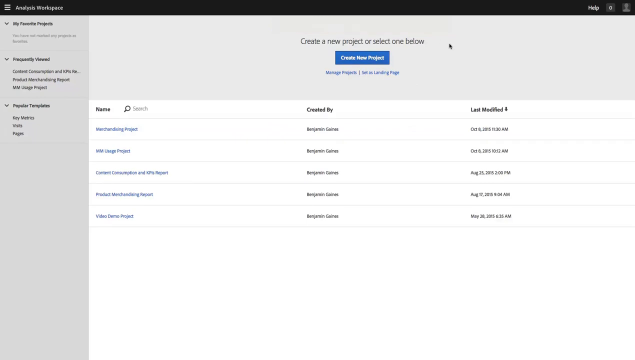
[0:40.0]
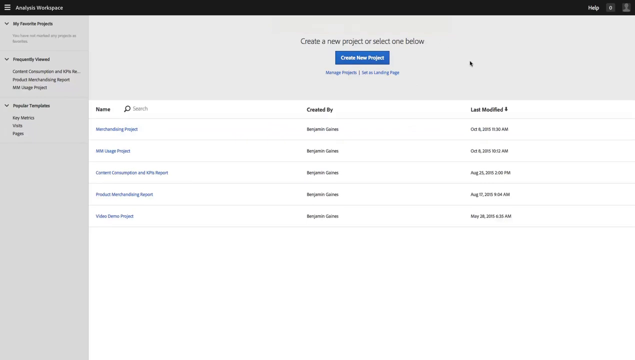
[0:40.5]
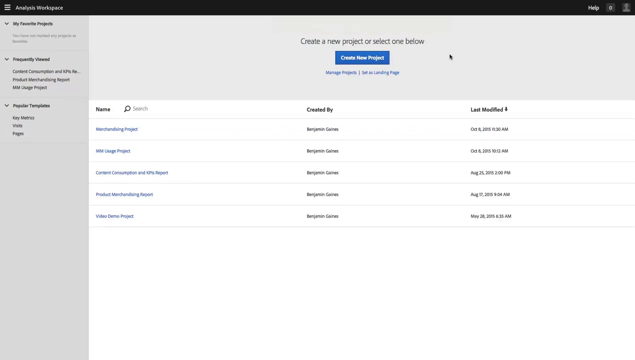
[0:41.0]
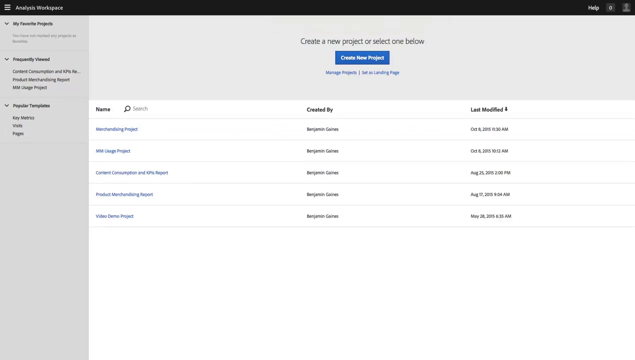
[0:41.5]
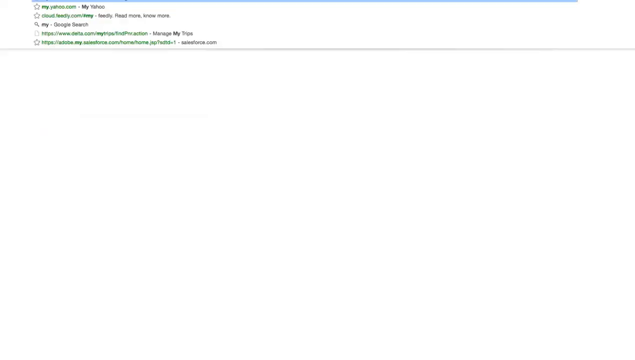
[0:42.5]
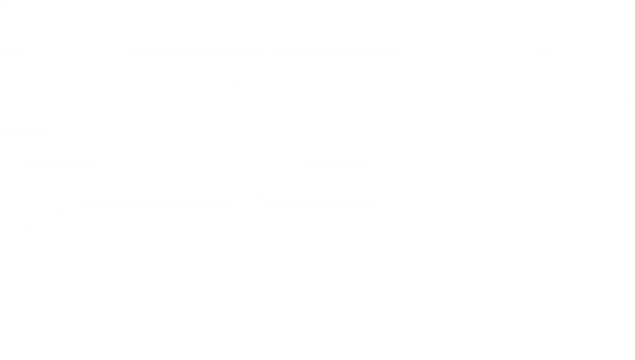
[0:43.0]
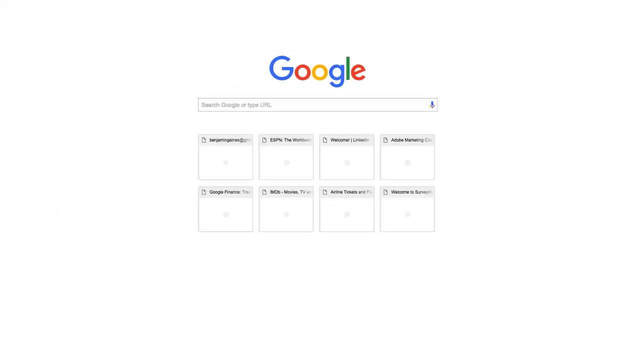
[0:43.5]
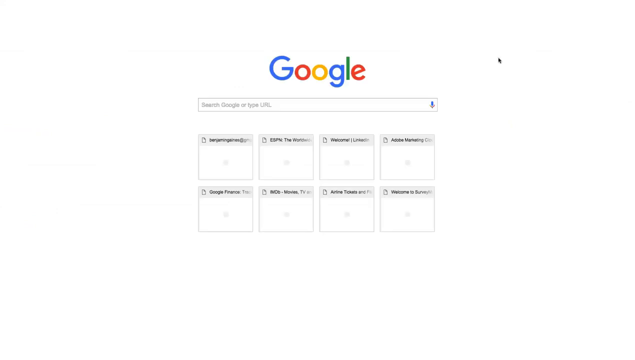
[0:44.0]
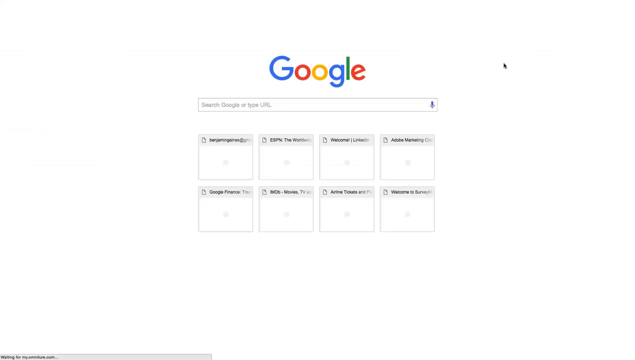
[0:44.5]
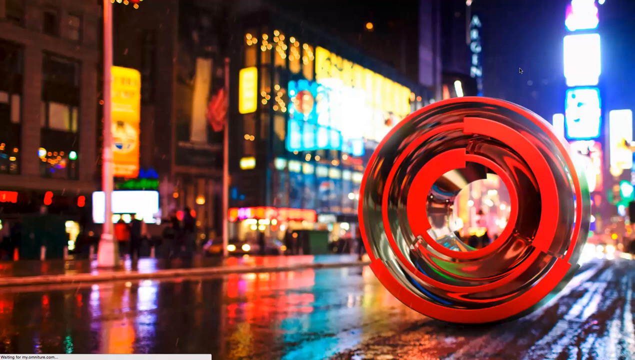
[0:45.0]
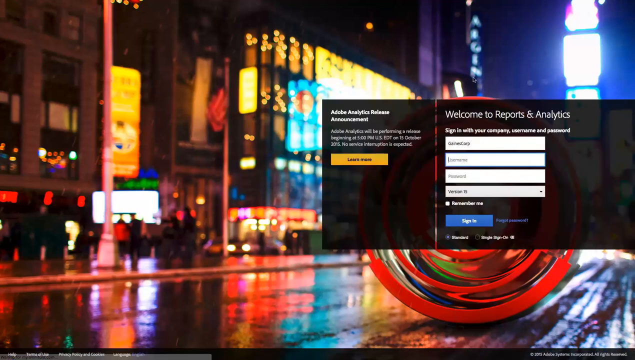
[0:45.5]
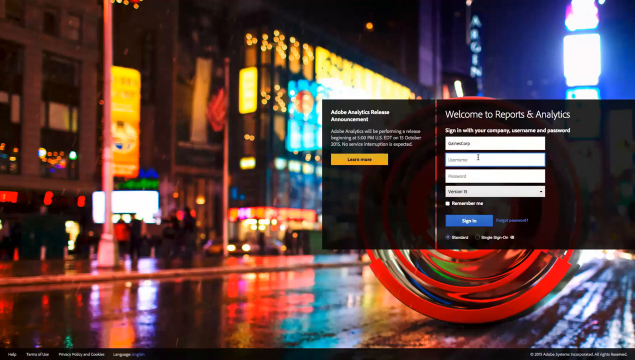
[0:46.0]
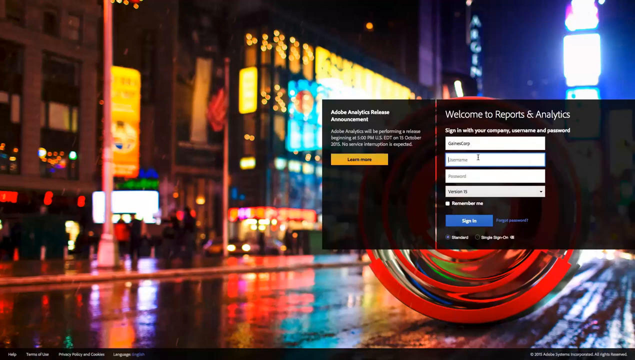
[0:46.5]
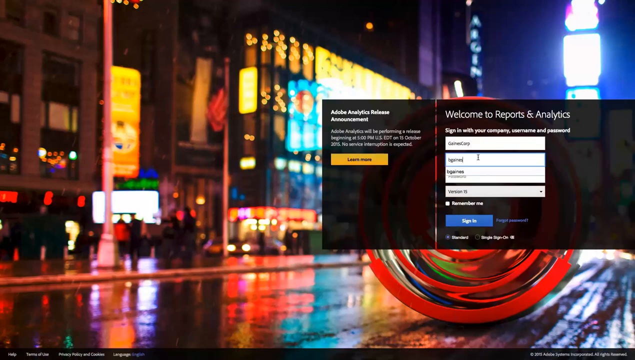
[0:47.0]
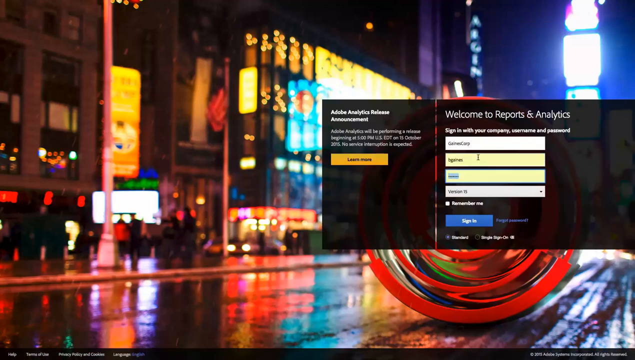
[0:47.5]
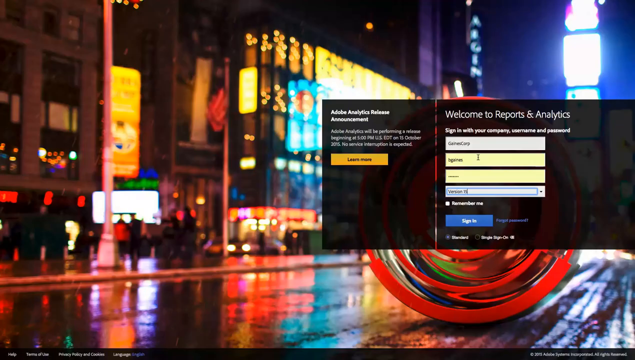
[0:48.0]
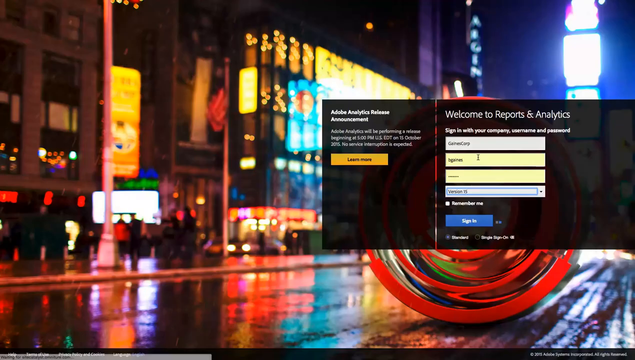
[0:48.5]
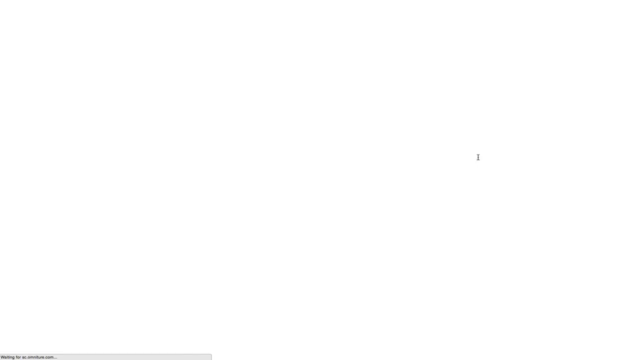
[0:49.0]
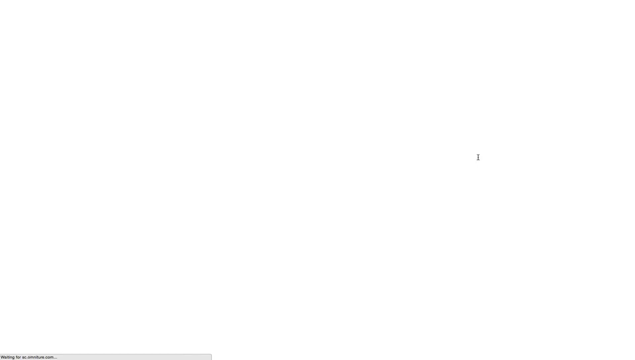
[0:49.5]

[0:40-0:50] The mouse pointer hovers to the right of the new project button for a few moments, then moves straight up out of frame at the top of the screen. The screen changes to blank white, and an address bar history with five different websites drops down at the top. A couple of moments later the Google home page appears, then the screen goes blank again and changes to a page with a background that looks like a picture of Times Square at night. On the right center it says "Welcome to Reports & Analytics" and "Sign in with your company, username and password." Information is typed into the four text fields below, the sign-in button is clicked, and the screen goes blank white again.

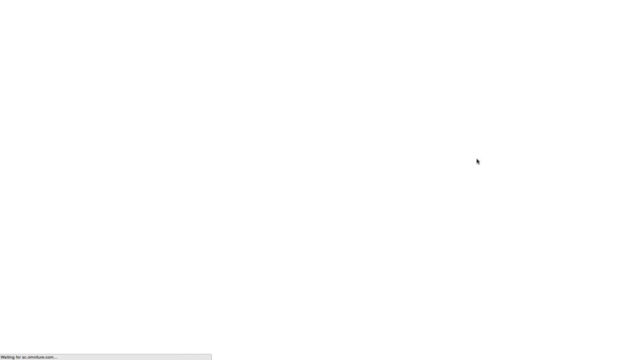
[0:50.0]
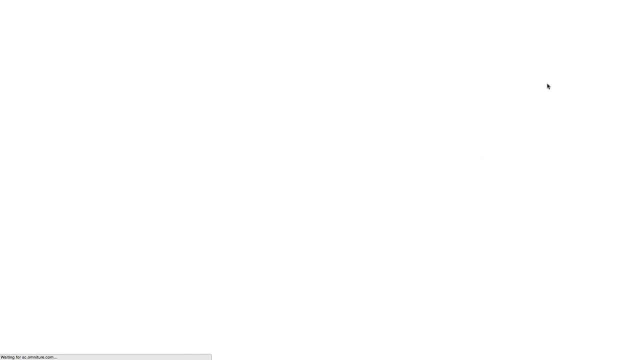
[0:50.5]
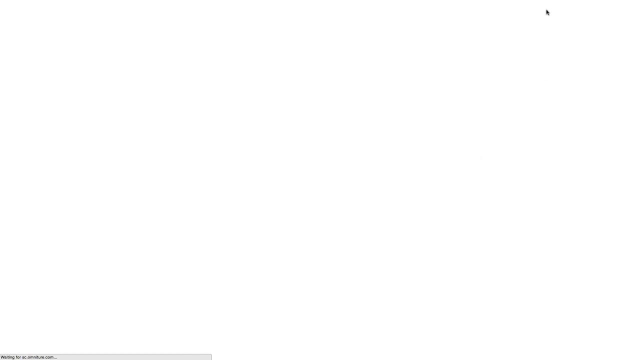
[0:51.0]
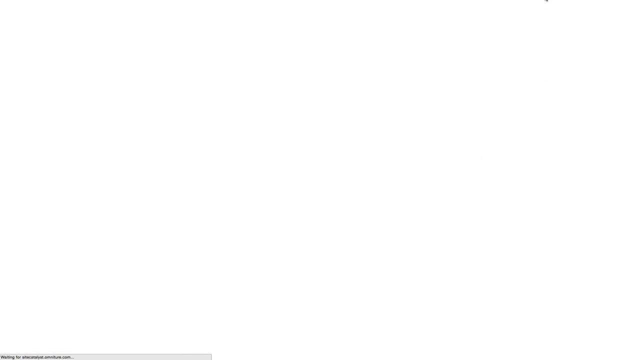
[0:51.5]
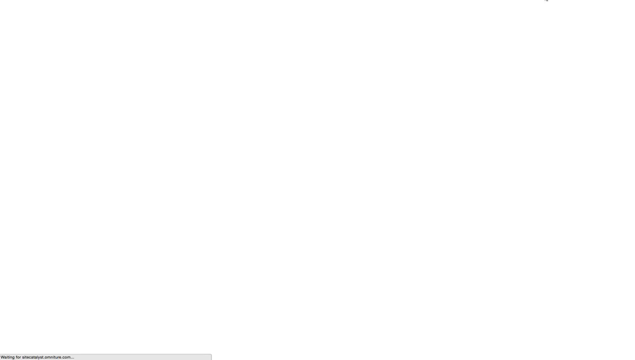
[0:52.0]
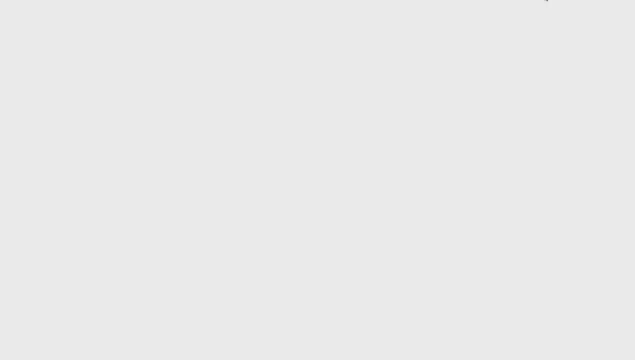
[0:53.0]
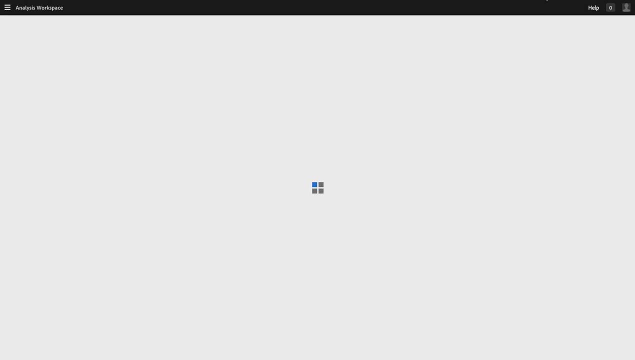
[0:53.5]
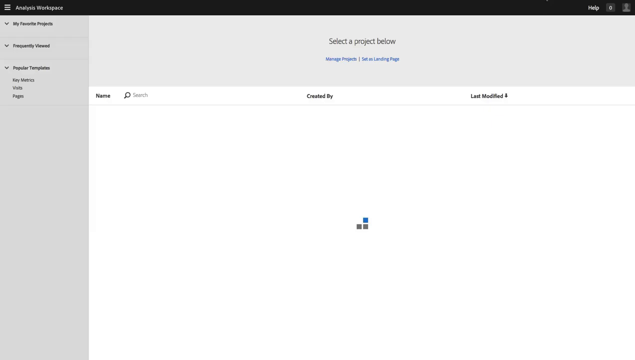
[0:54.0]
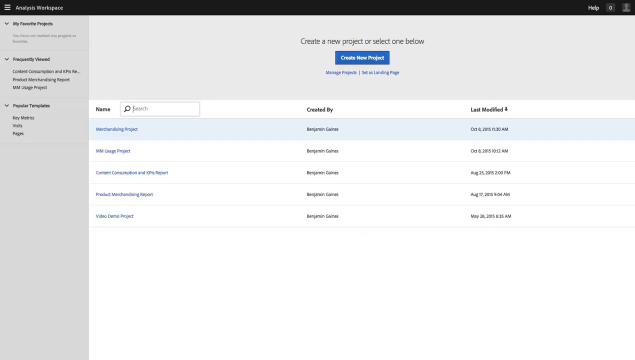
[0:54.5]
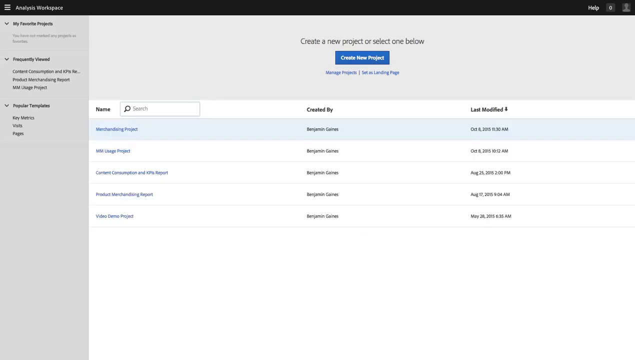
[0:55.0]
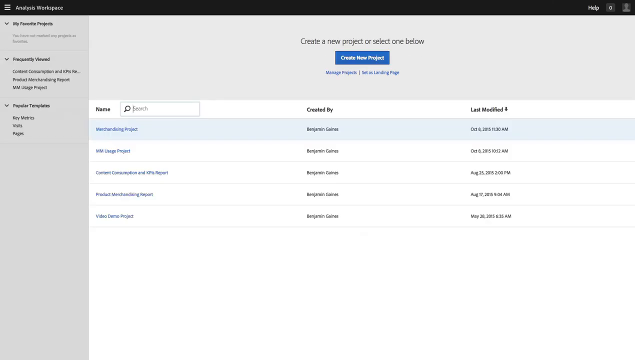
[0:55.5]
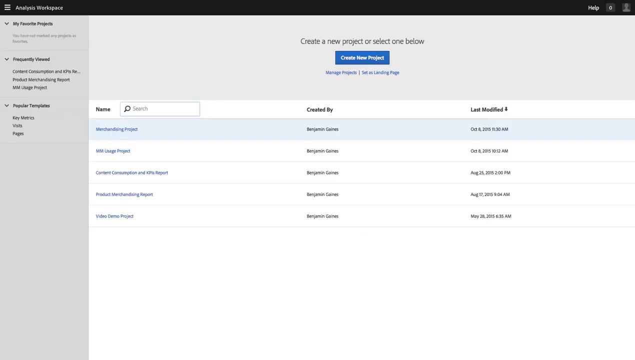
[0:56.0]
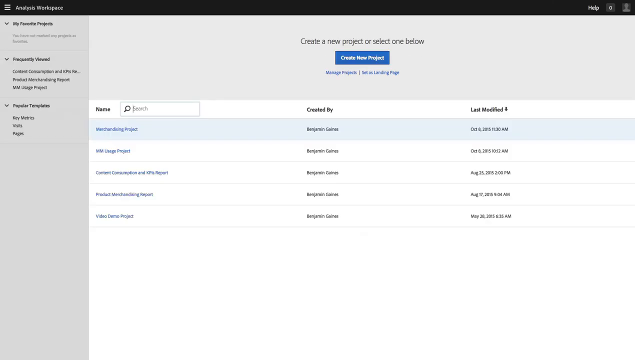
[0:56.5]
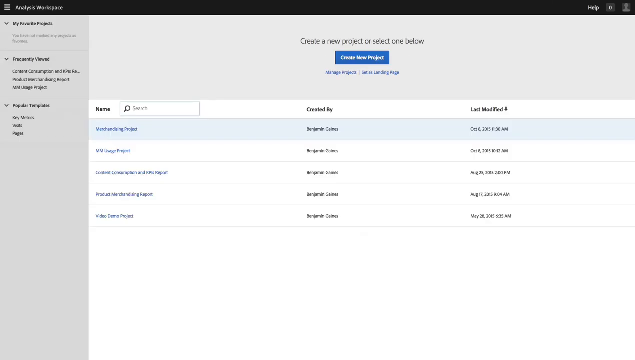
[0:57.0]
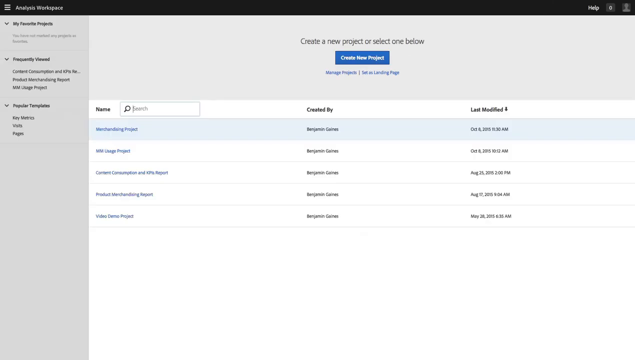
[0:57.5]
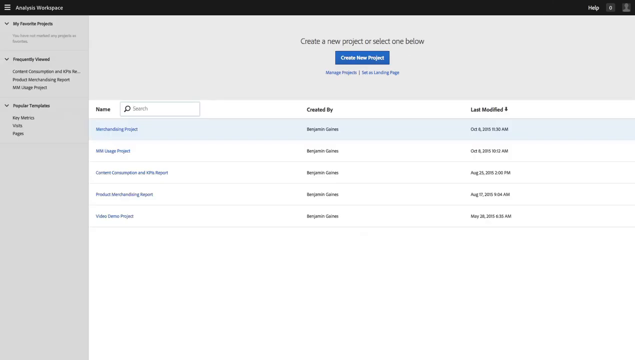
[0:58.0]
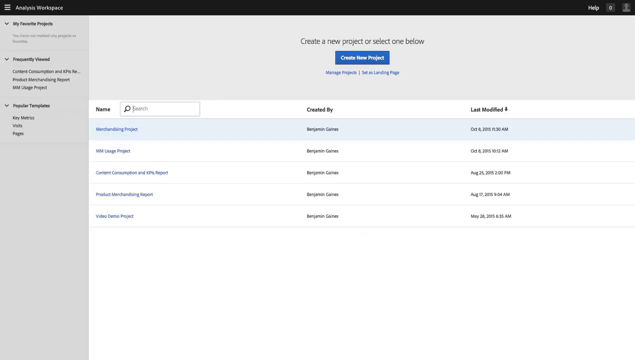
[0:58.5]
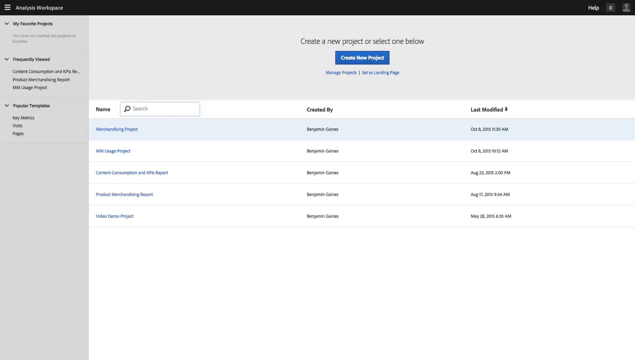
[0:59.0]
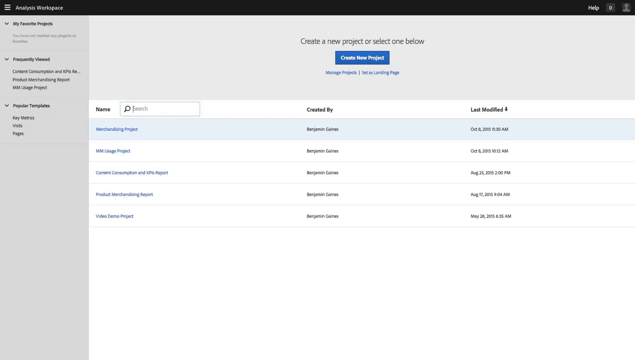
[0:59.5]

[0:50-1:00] The screen is still white. The mouse pointer starts in the center-right area, hovers up toward the top right near the corner, and then goes almost completely out of frame. The screen blinks a little and turns light gray, and a small loading icon appears in the very center, made of four gray squares forming a larger square, with a blue square moving from left to right among them for a moment. The screen then transitions back to the same Analysis Workplace application page seen at the beginning.